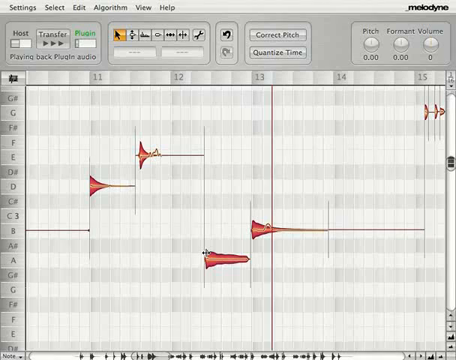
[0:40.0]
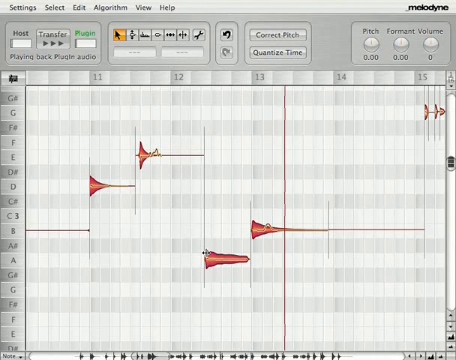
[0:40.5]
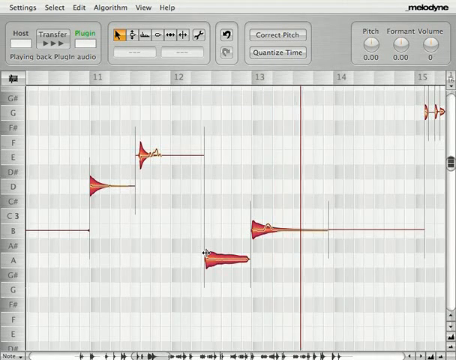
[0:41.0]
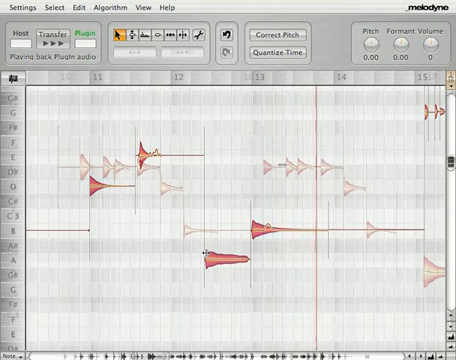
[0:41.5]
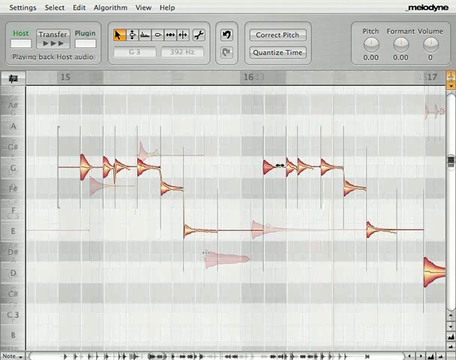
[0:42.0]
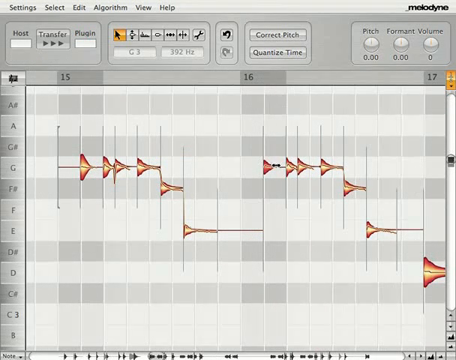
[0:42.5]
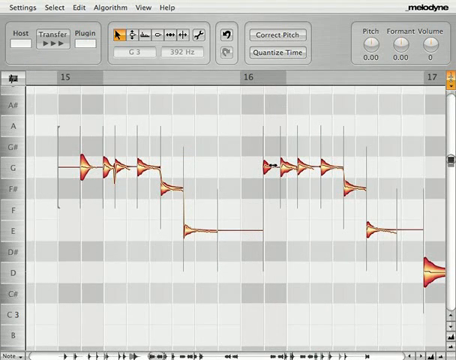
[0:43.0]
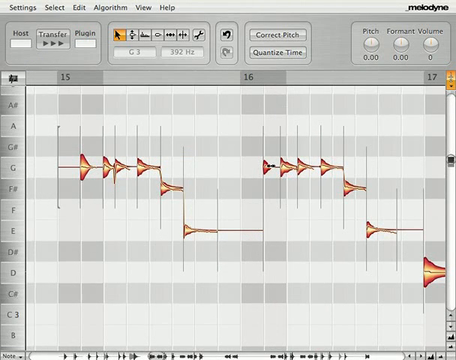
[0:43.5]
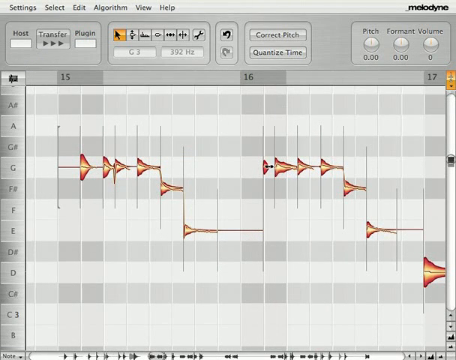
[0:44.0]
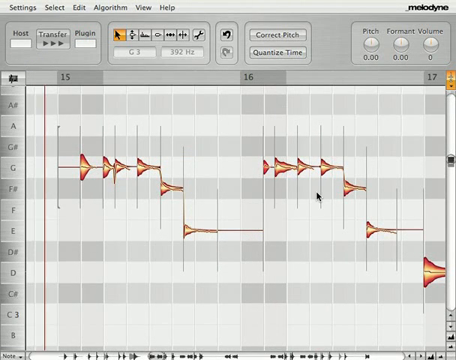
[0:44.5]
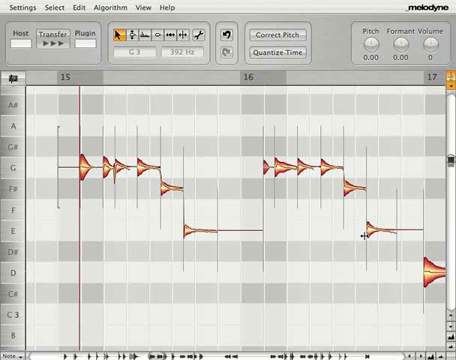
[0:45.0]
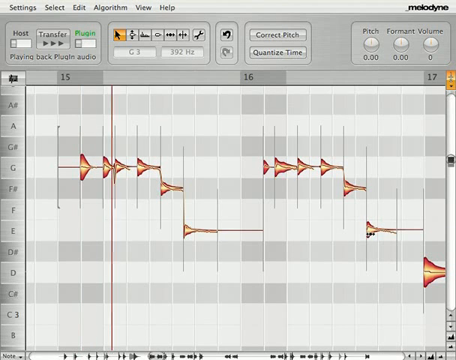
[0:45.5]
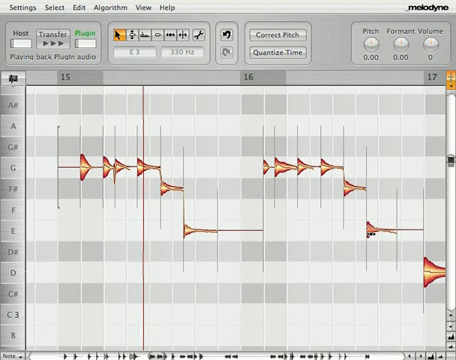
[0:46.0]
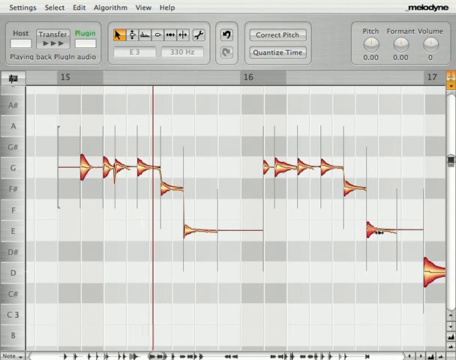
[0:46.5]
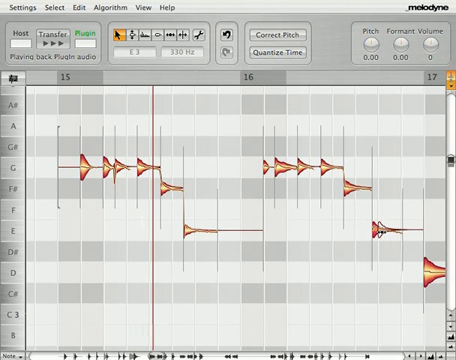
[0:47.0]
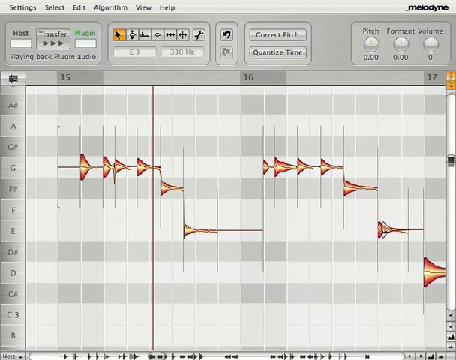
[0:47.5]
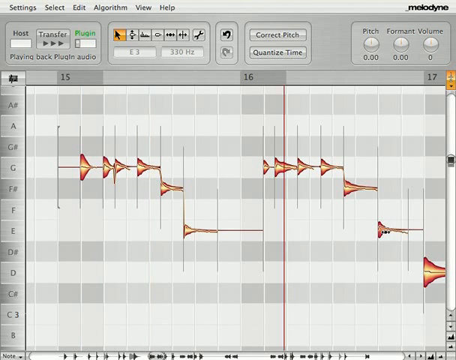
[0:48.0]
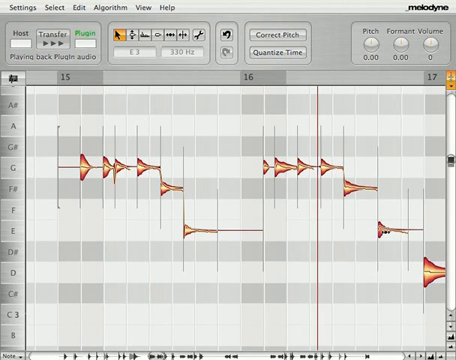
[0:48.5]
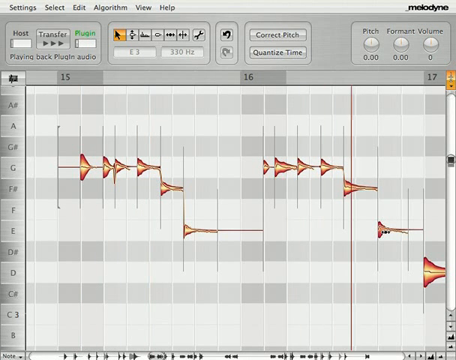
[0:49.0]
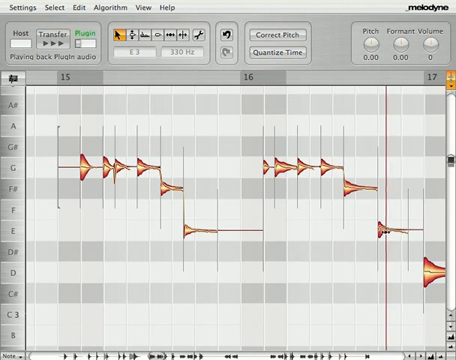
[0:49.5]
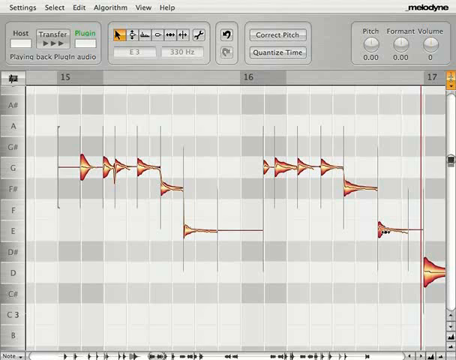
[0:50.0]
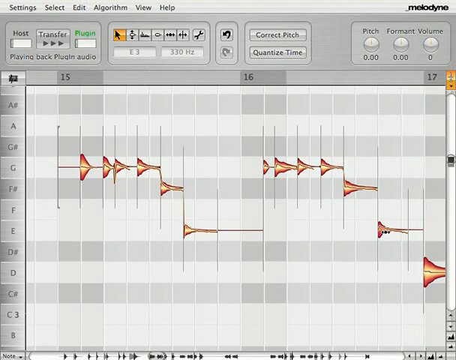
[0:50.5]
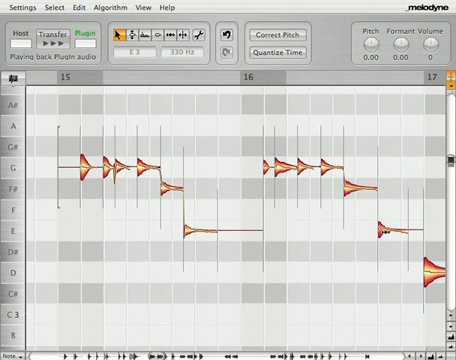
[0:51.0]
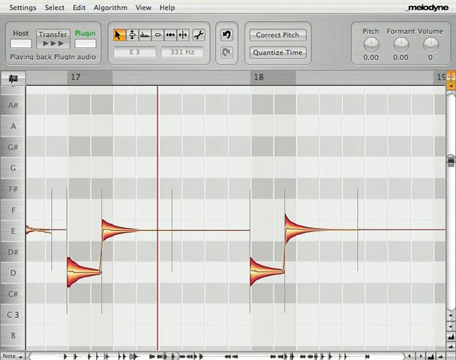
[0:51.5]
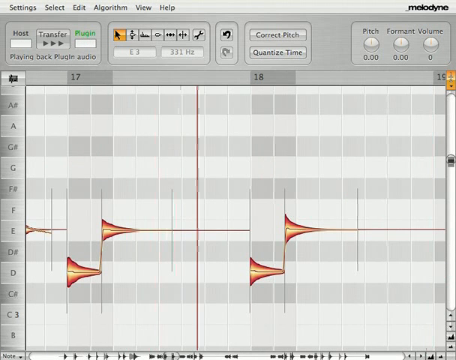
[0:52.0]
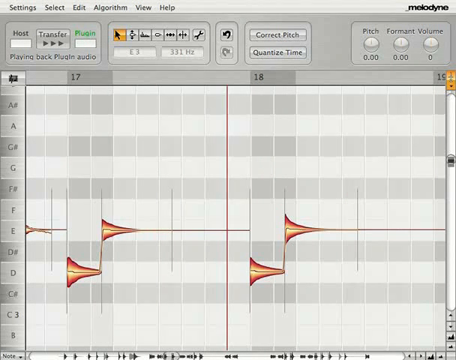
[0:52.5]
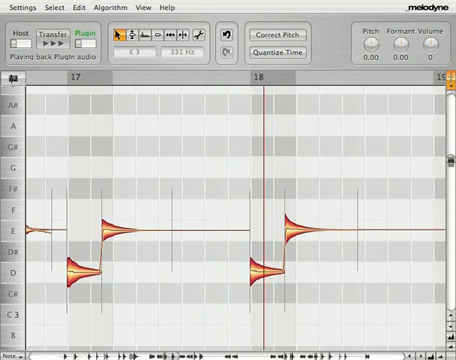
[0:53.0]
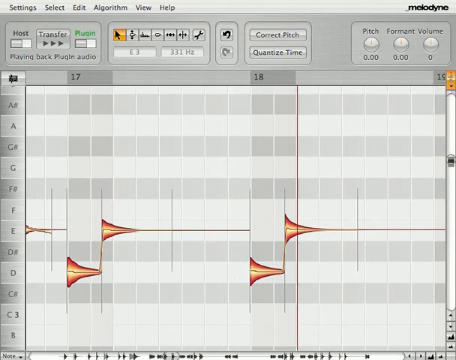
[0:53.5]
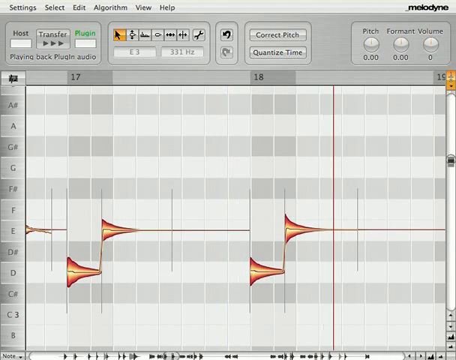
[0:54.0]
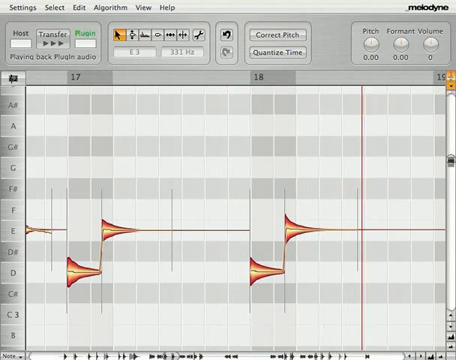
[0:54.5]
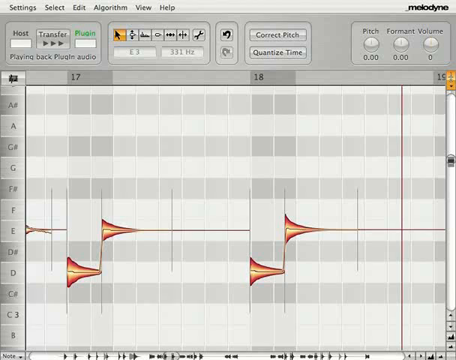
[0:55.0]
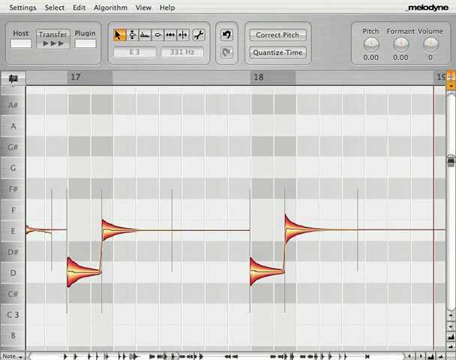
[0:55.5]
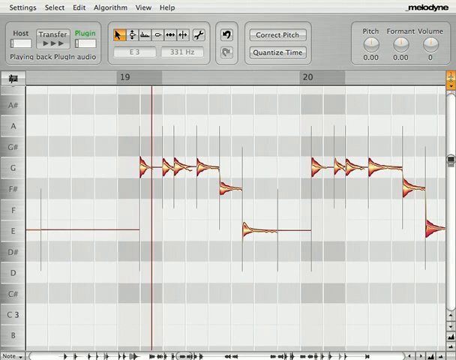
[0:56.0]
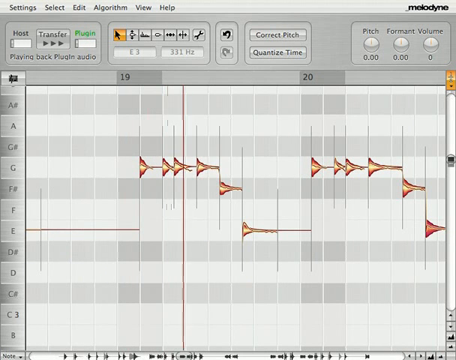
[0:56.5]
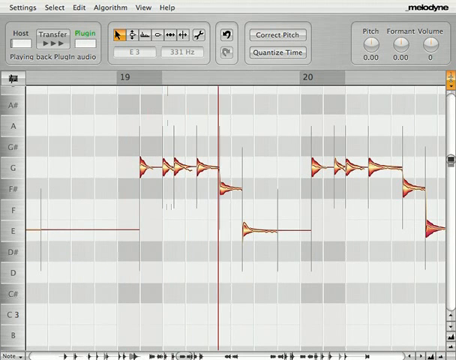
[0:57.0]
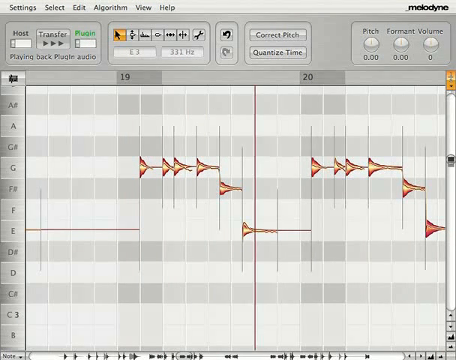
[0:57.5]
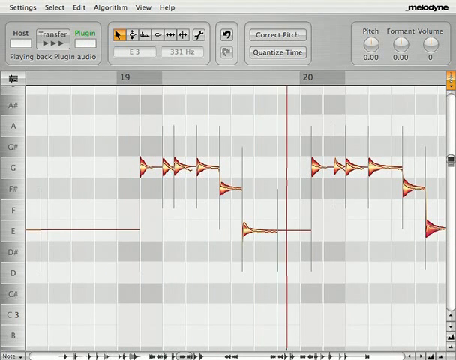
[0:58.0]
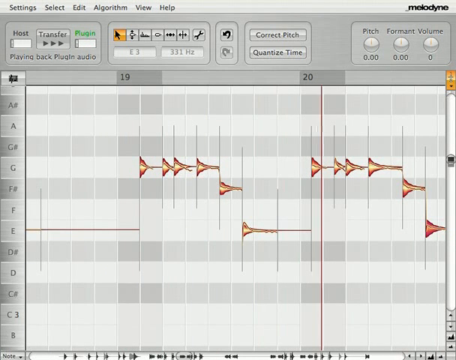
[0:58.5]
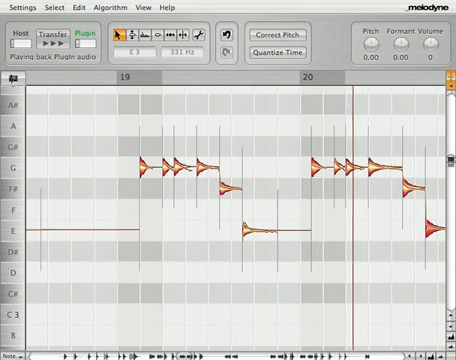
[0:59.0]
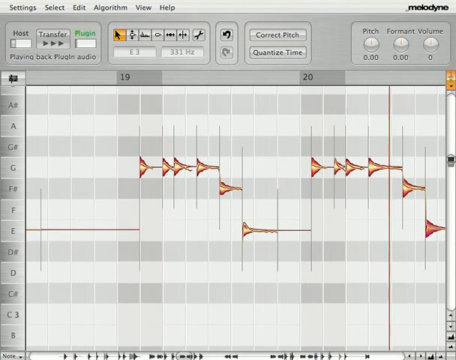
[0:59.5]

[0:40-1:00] The screenshot of the Melodyne software continues as the demonstrator keeps adjusting the length of the notes, both compressing and lengthening them. The result of the changes seems to be played back as the red time marker moves across the page. The numbers 15, 16 and 17 appear at the top of the grid, possibly seconds. The host and plugin indicators on the screen are moving, and the note playing is shown near the top, first E3 and then G3. There are buttons to correct pitch, as well as volume, format and pitch indicators that look greyed out, apparently not switched on. At the very top are menu items for settings, select, edit, algorithm, view and help.